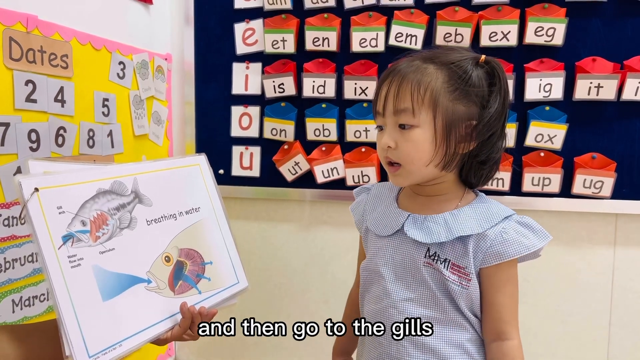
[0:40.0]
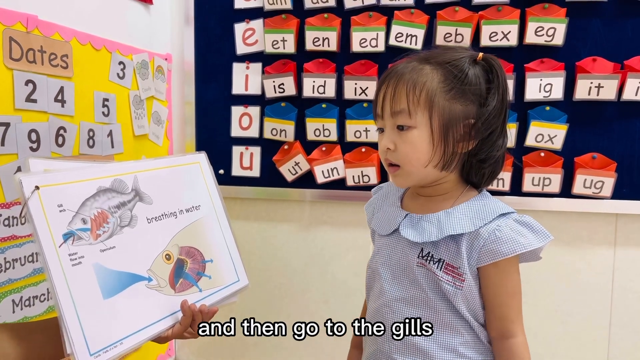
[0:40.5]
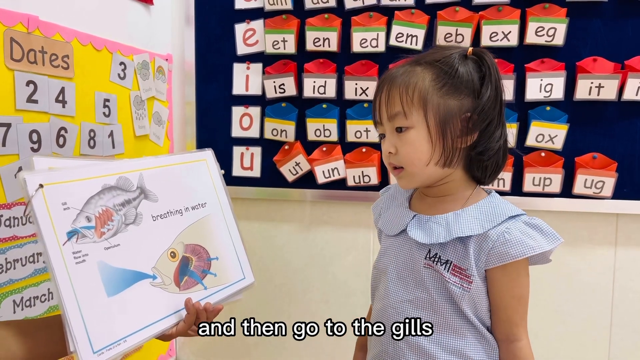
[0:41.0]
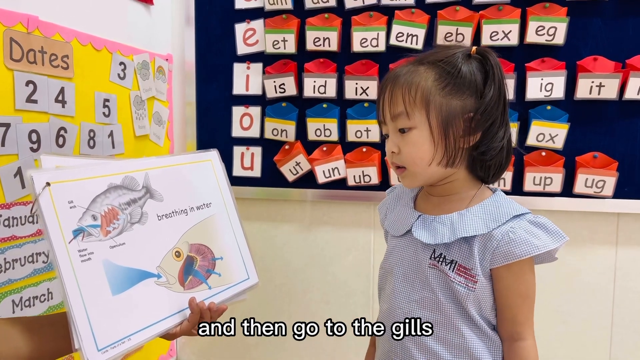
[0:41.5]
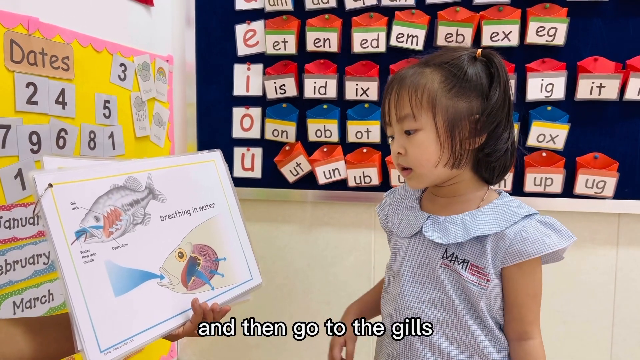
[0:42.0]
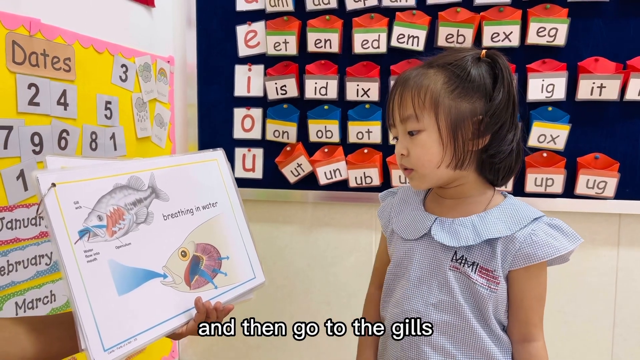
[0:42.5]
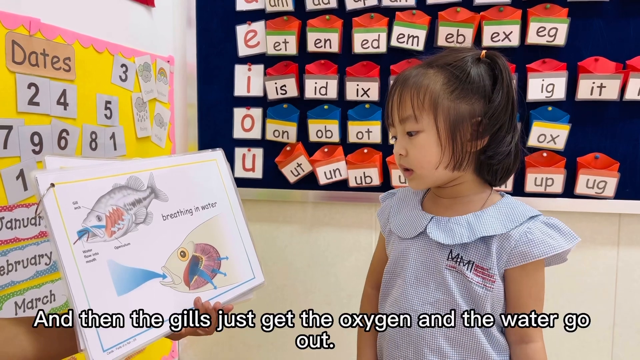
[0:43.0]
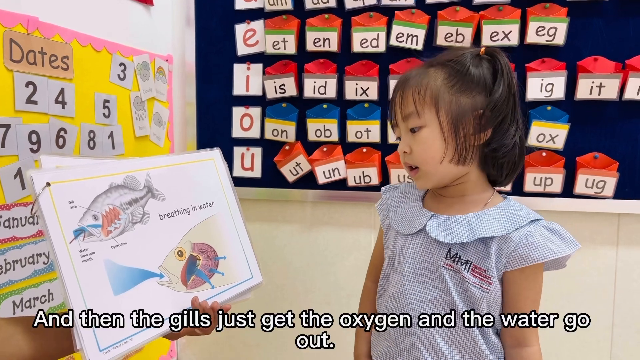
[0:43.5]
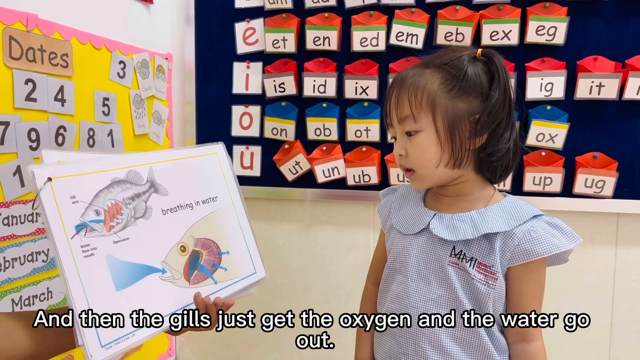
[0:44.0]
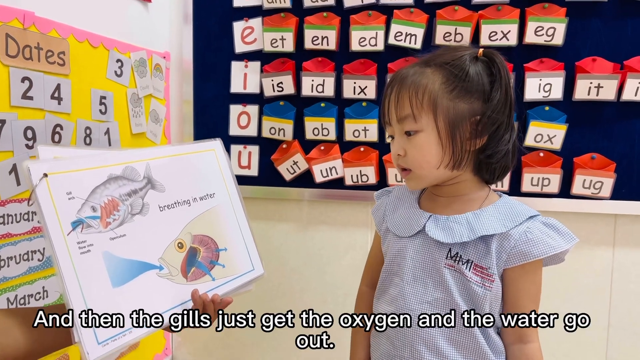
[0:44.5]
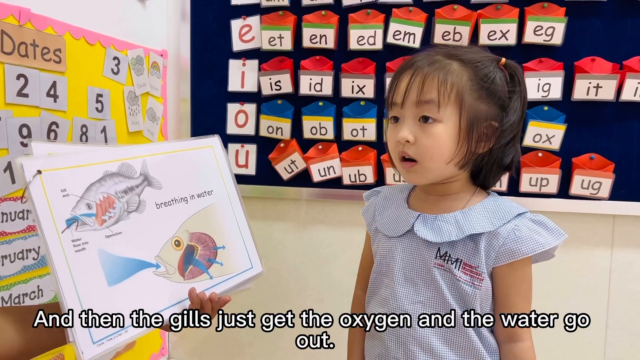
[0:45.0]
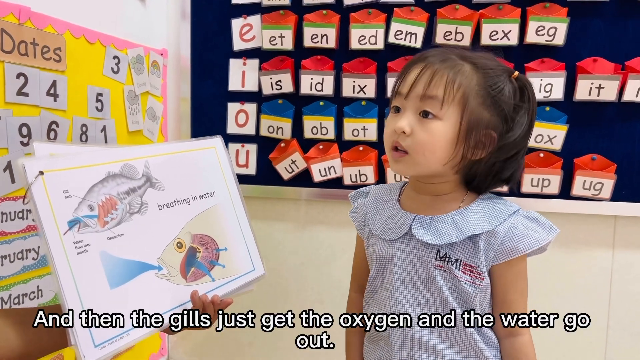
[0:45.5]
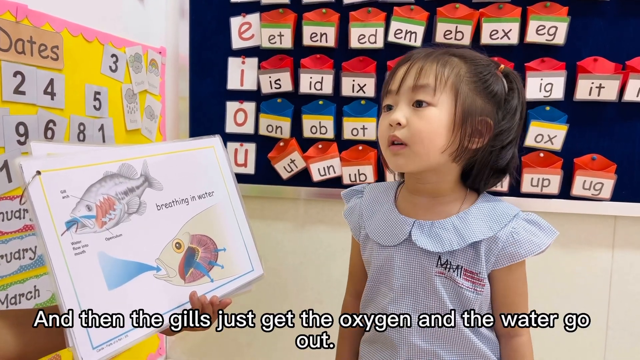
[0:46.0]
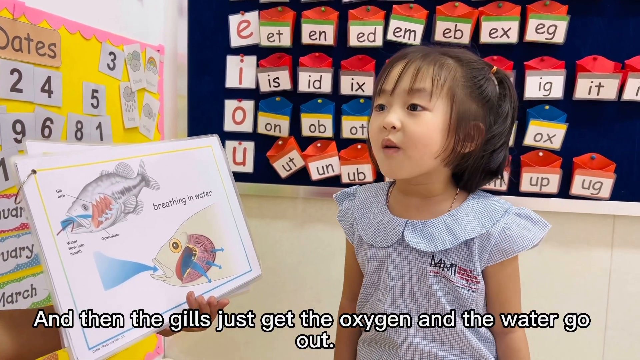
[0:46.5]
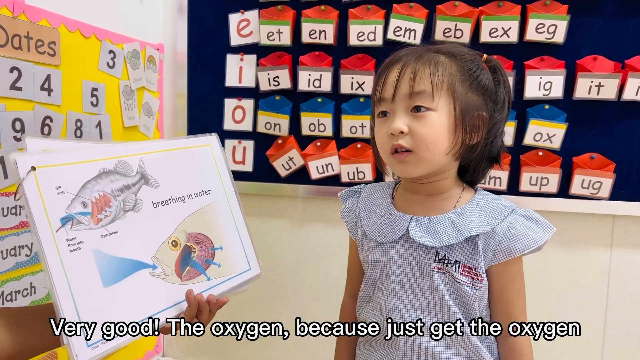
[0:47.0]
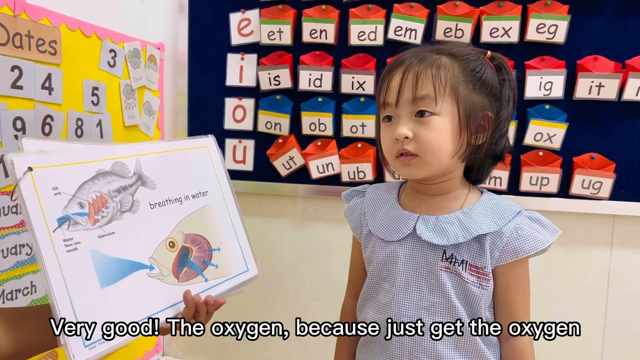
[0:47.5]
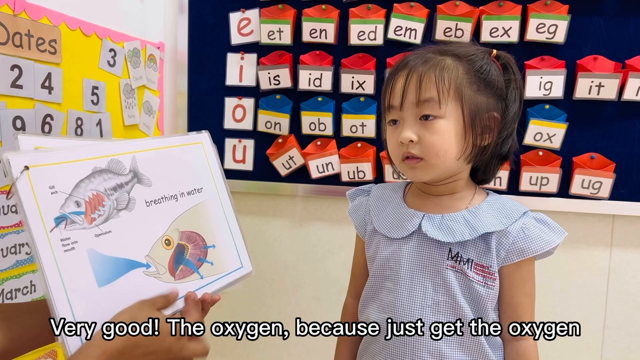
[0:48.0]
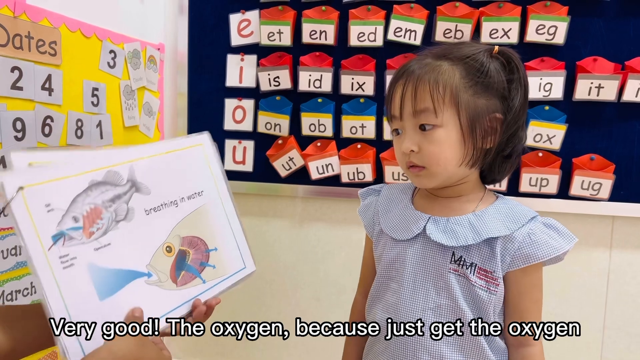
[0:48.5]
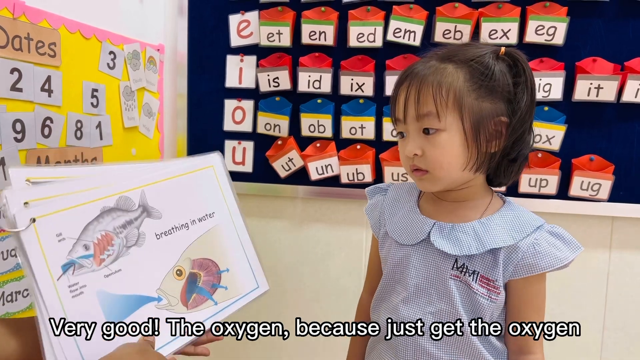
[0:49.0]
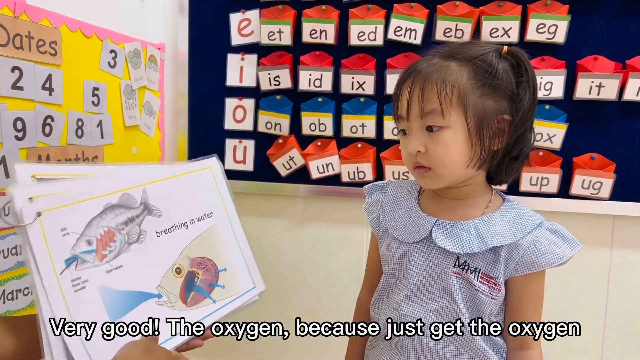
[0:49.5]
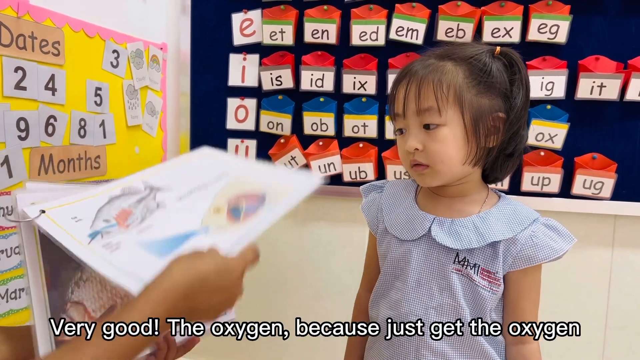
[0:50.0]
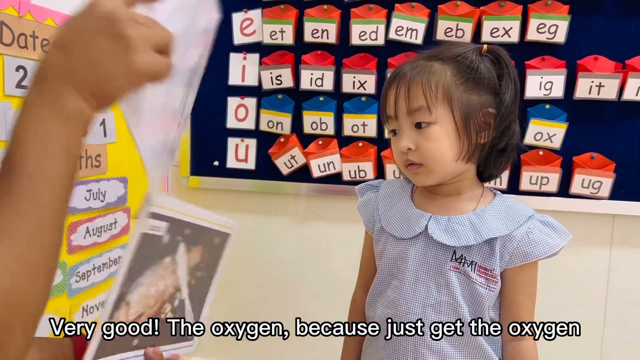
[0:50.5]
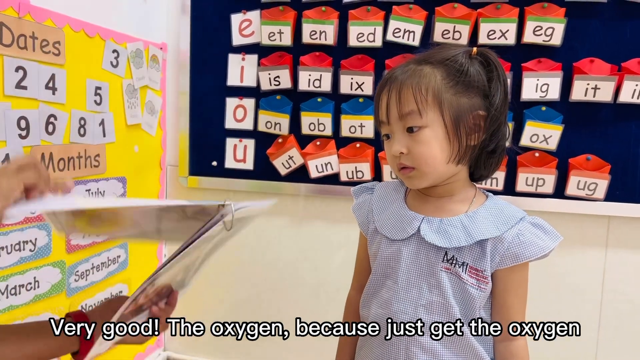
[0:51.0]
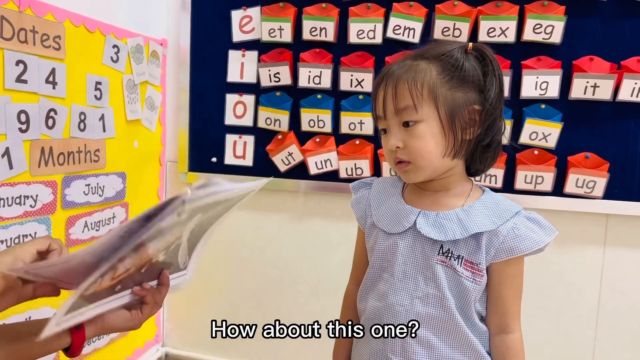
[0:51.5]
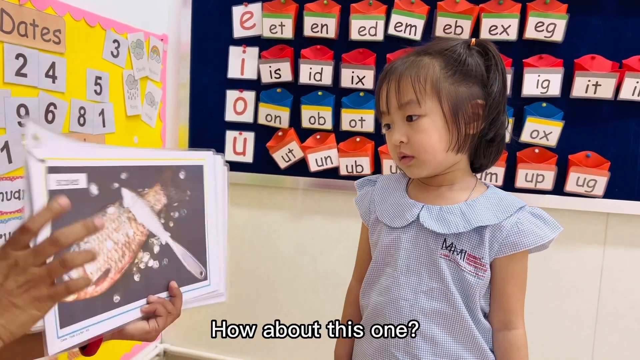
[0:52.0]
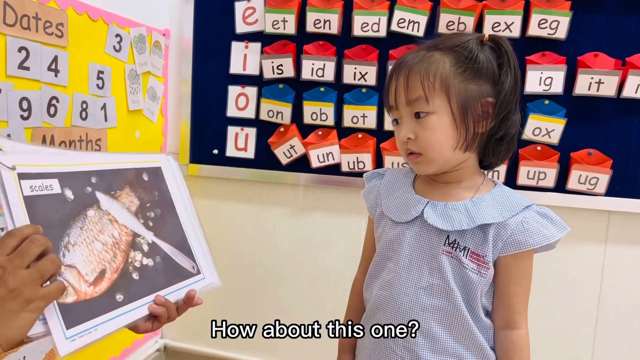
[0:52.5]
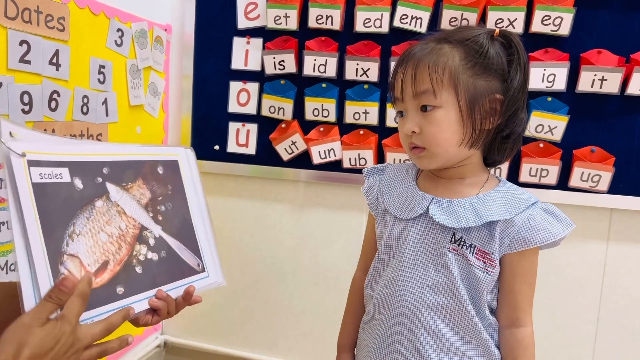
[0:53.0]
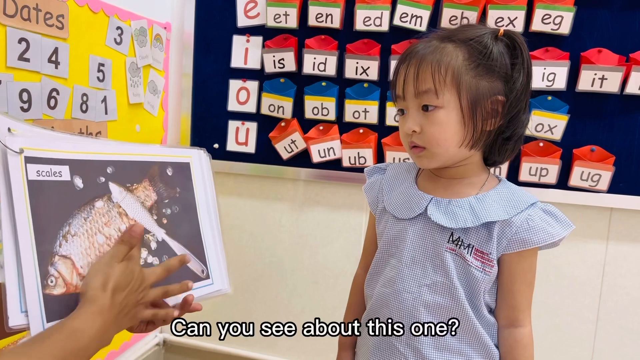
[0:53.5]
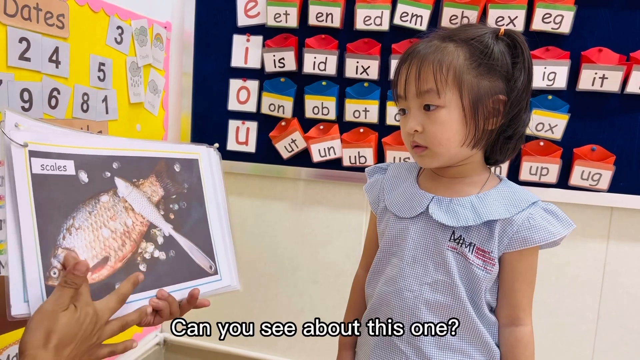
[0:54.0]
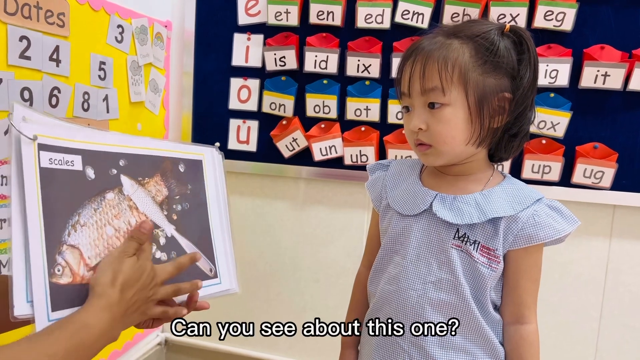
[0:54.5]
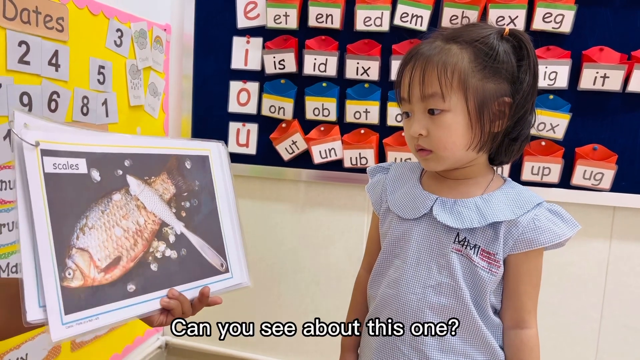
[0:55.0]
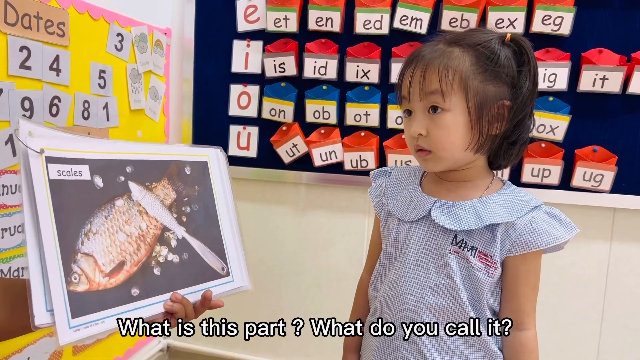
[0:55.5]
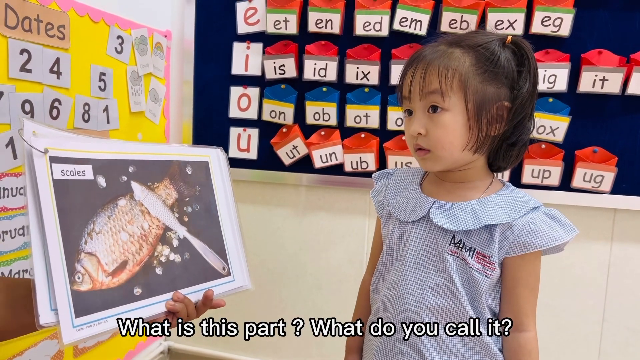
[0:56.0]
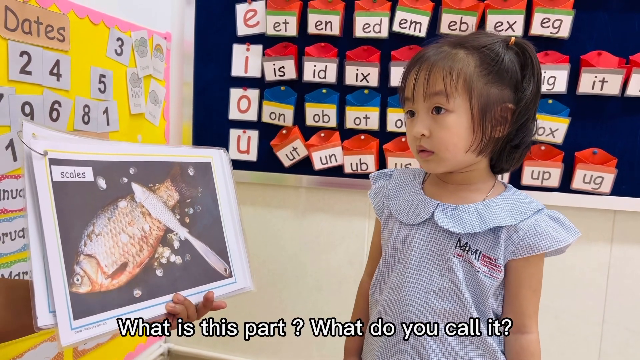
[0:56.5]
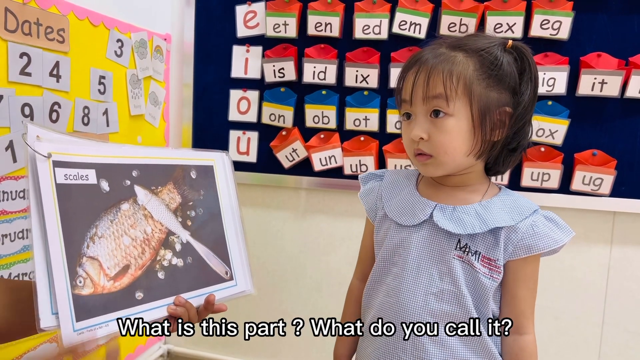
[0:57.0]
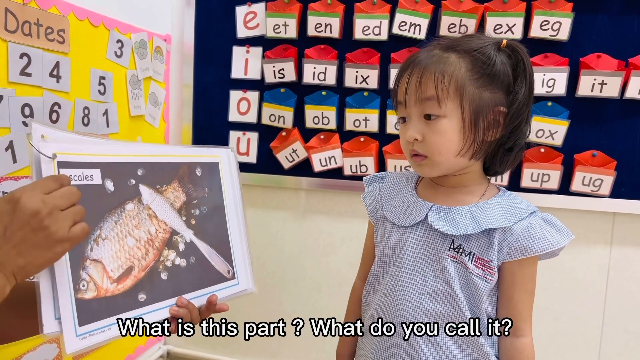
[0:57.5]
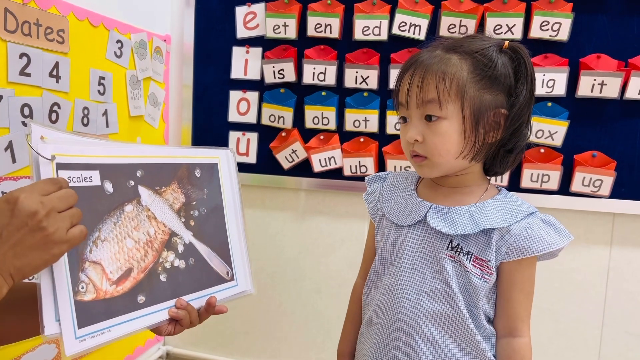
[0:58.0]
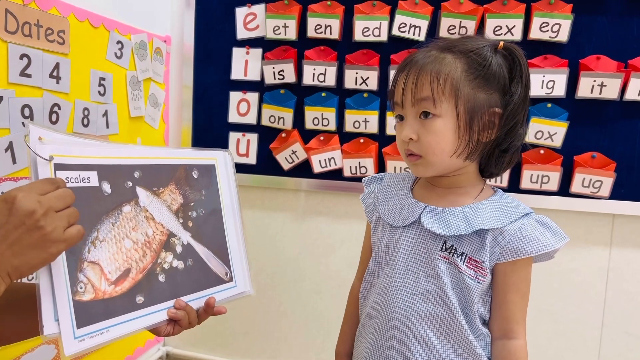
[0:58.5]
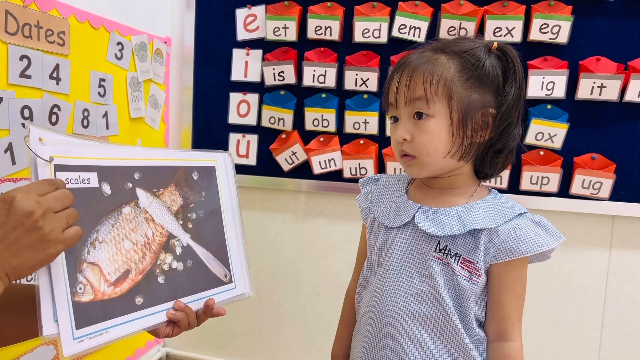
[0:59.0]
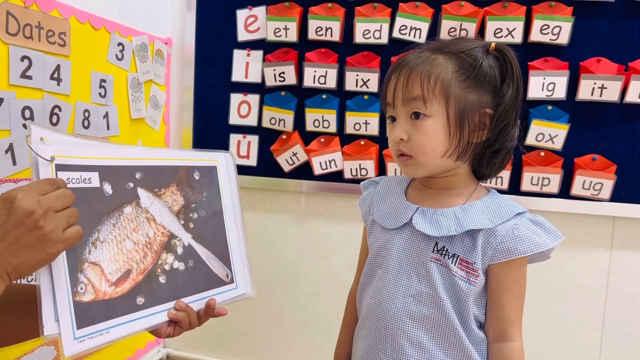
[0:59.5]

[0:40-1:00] Fifi, four years old and from K1 Diamond, answers questions about what a fish is, what gills are and how they help the fish breathe. She looks very confident at first, then a little nervous when asked how gills work, but she answers. She shows a similar nervousness when the questions about scales begin, yet gives the right answer, starting to explain what scales are. Letters are on the wall behind her.